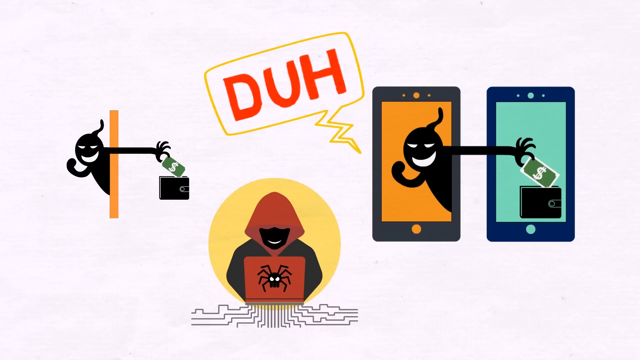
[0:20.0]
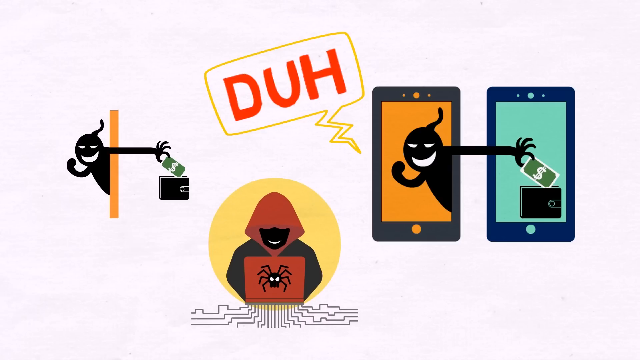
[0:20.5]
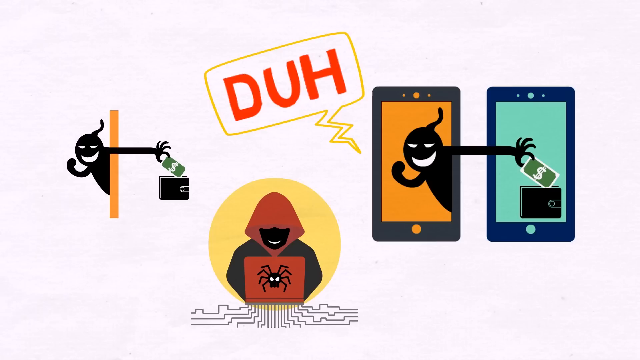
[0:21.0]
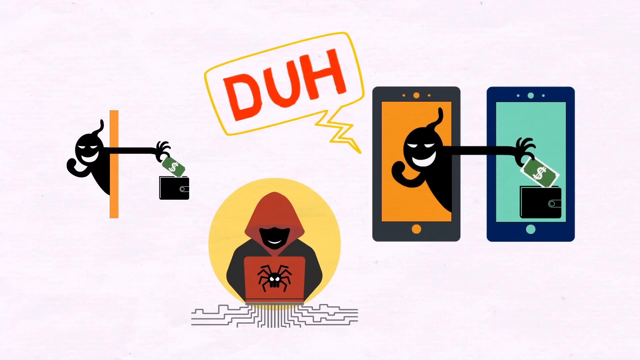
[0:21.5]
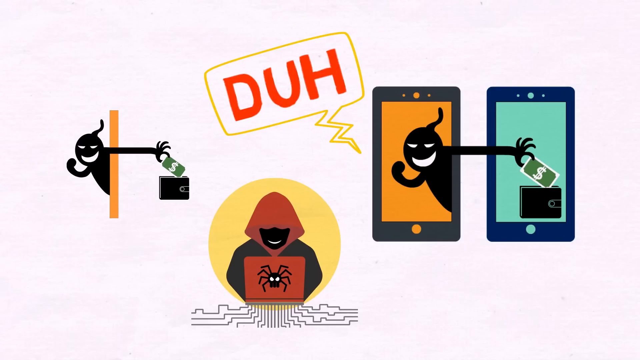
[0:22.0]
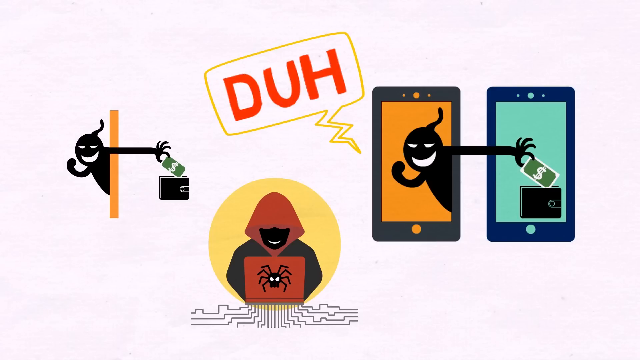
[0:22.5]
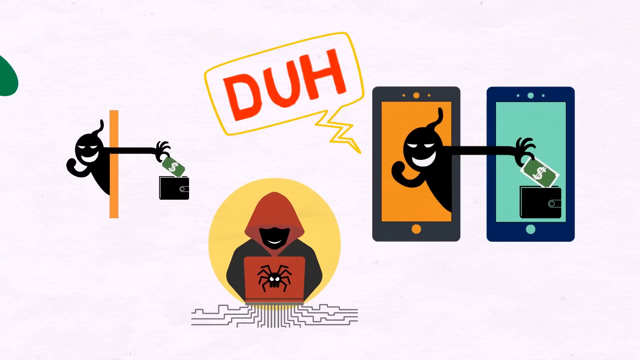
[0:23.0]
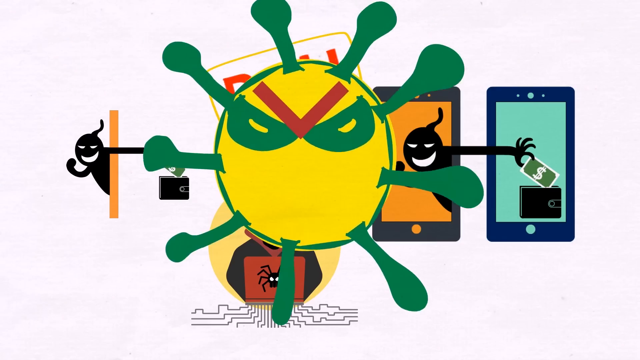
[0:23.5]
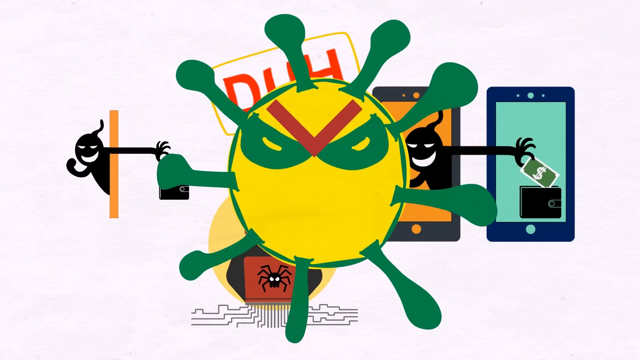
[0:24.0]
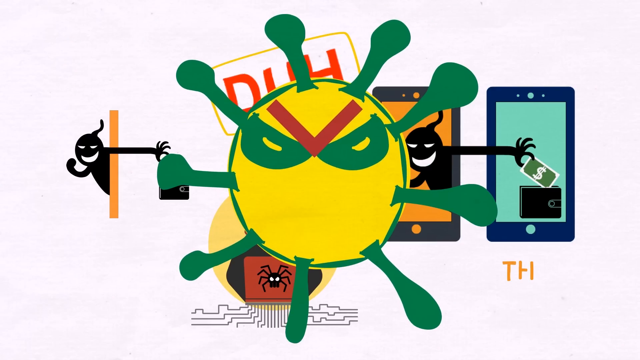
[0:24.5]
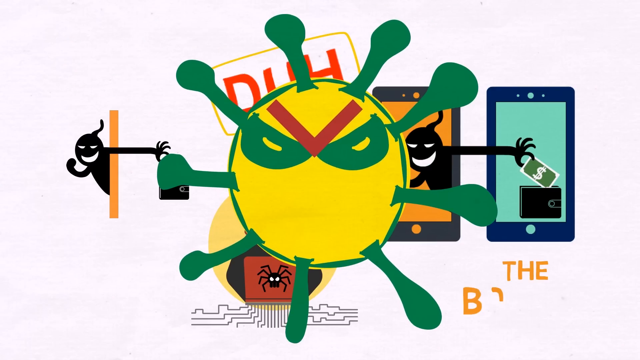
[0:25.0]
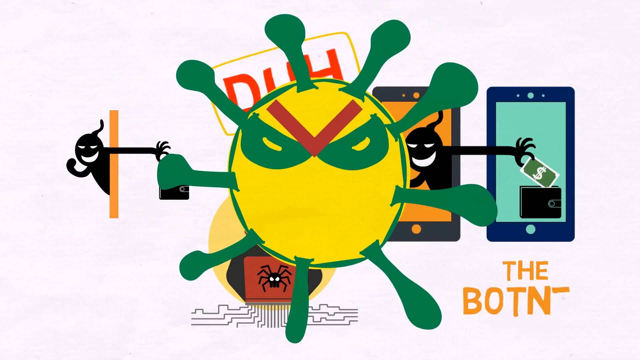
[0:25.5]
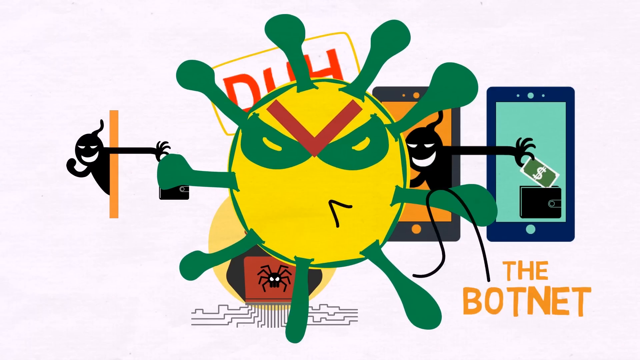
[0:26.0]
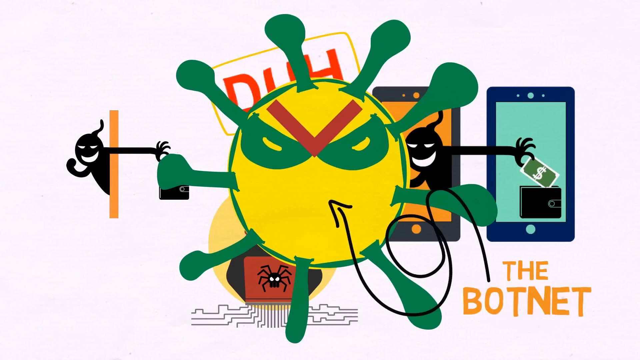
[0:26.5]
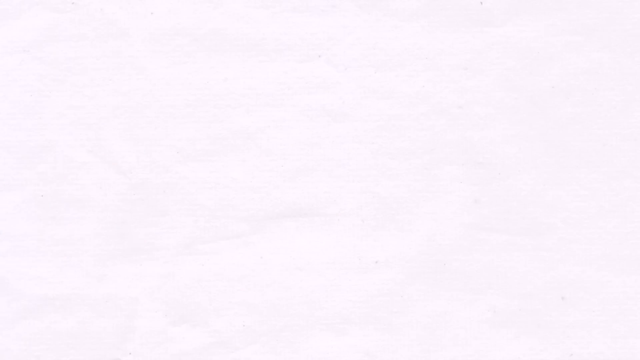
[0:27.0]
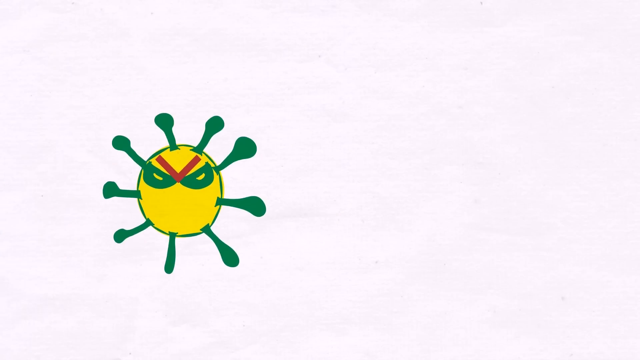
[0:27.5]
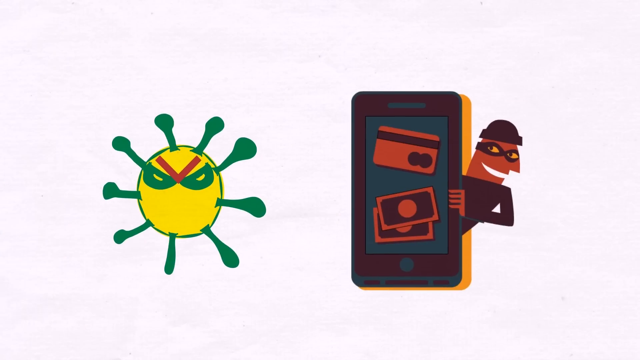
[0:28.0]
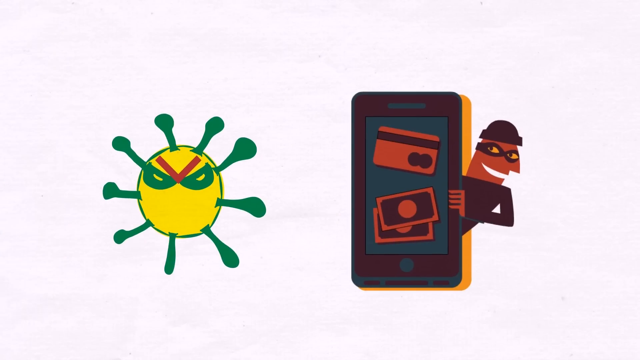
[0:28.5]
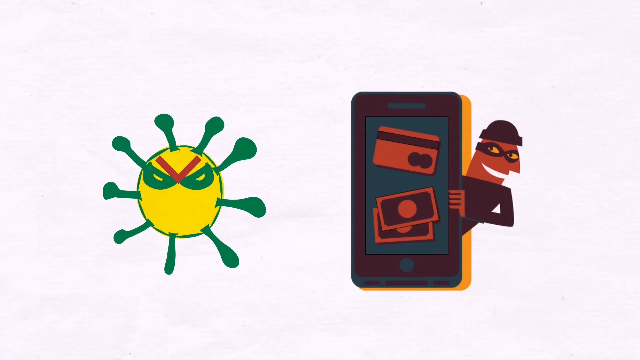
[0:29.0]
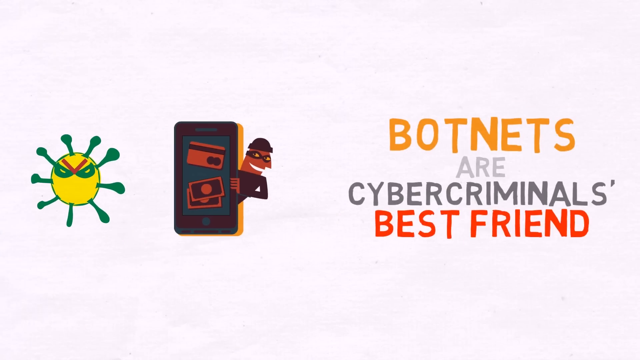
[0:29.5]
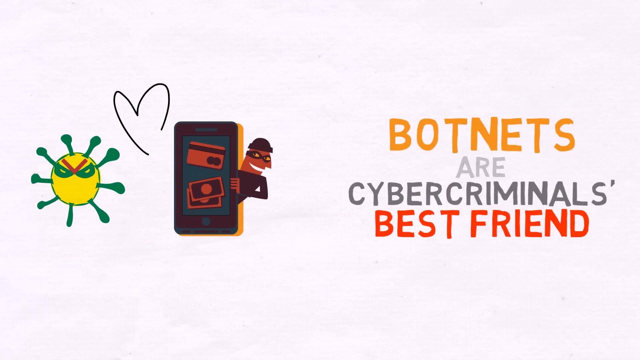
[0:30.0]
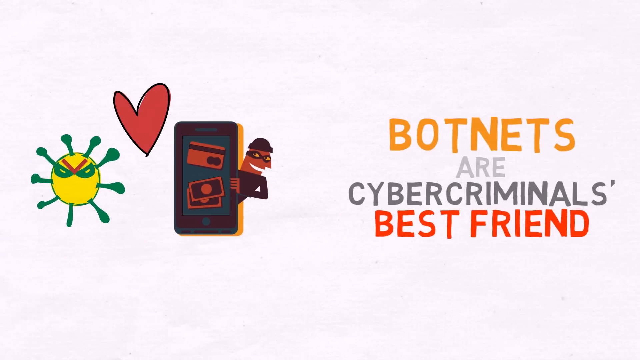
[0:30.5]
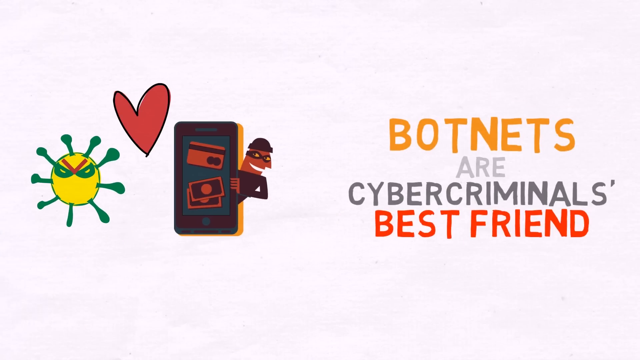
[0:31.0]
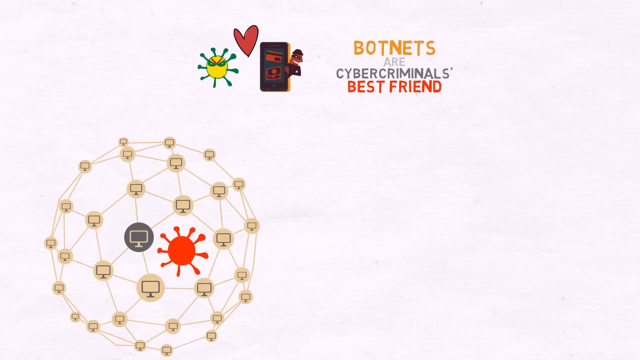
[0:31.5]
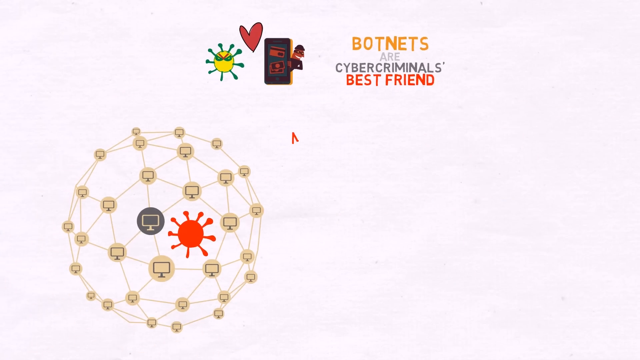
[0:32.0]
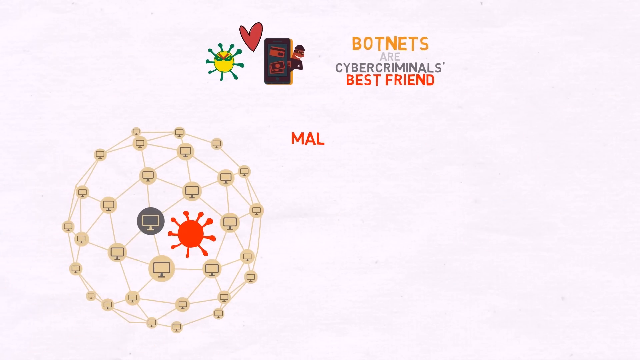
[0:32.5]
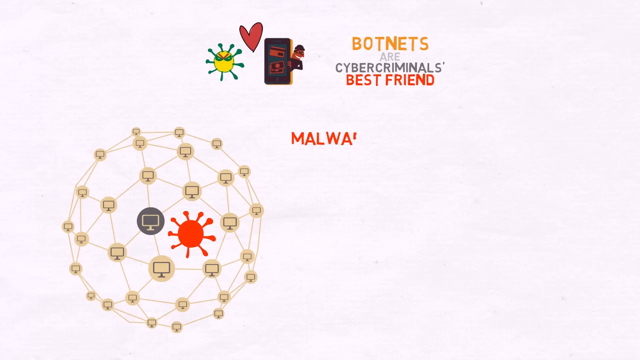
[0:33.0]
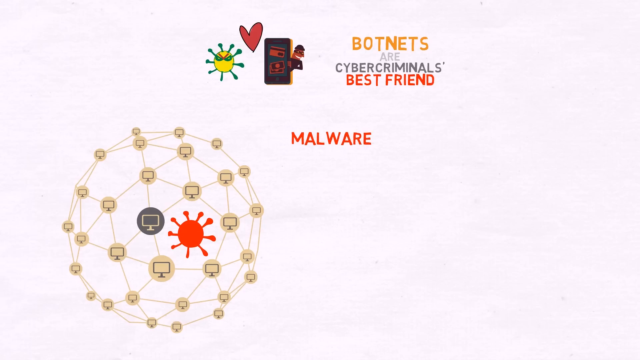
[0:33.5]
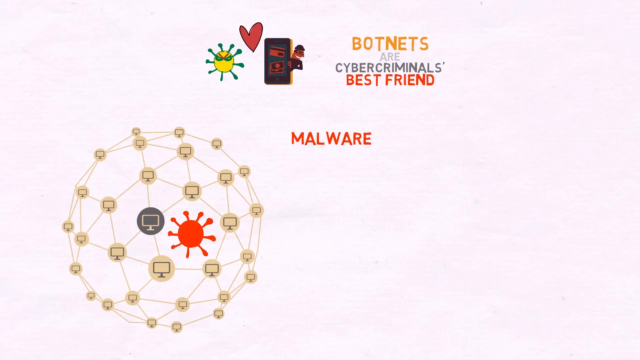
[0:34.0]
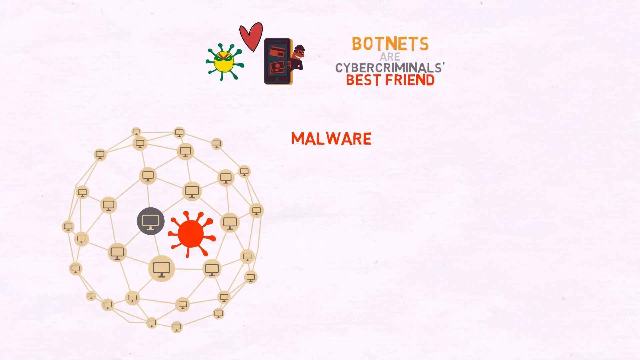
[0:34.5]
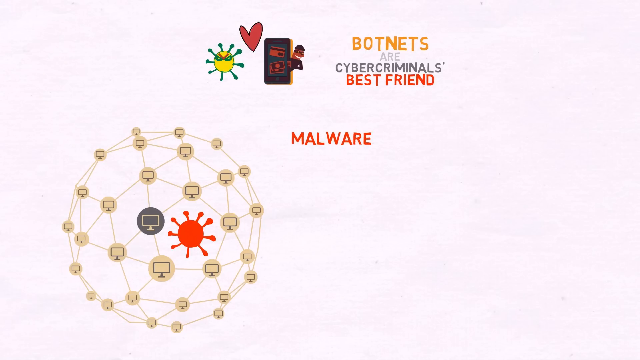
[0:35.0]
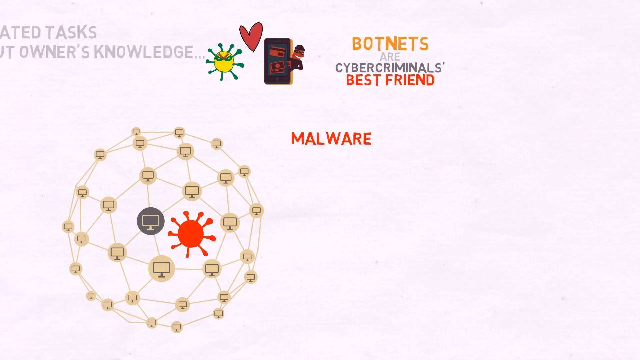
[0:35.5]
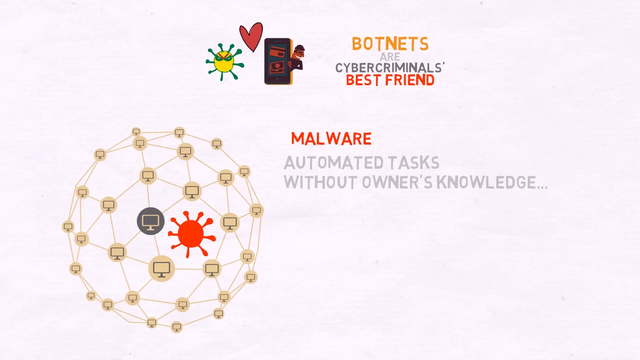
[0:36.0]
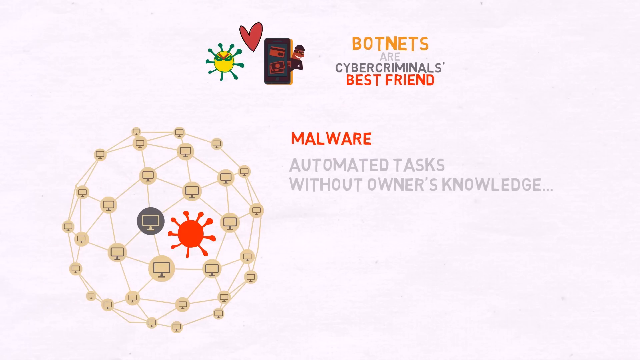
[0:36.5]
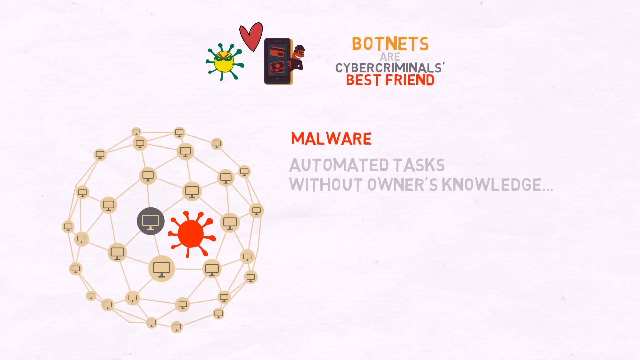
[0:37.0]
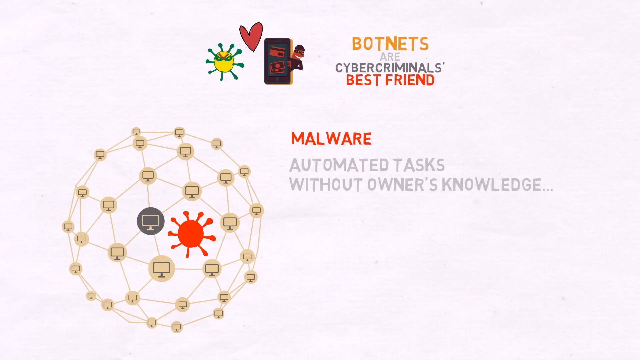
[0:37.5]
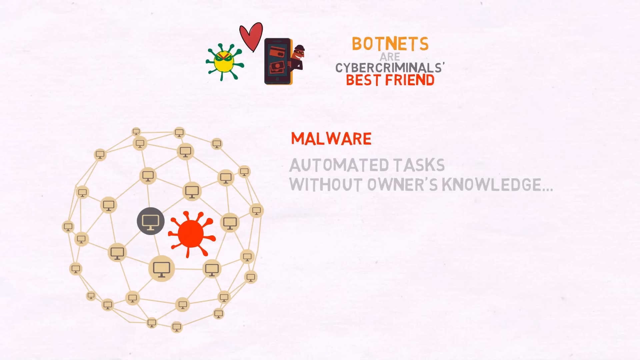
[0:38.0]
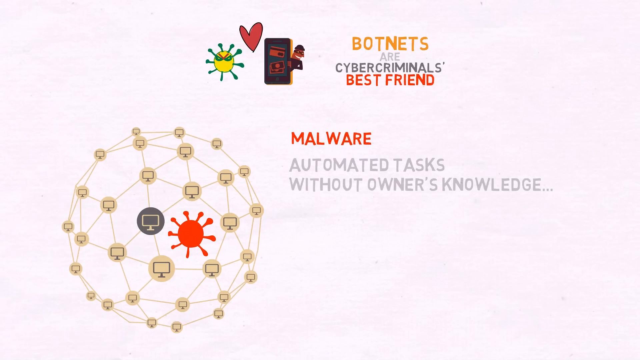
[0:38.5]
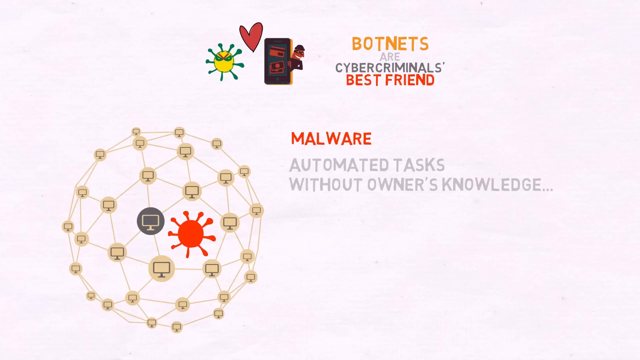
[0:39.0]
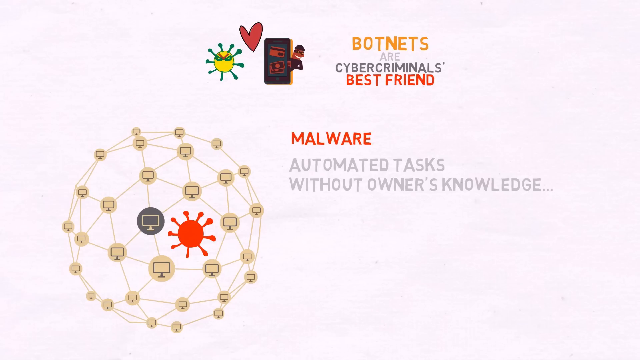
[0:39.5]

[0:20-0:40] The graphic changes. On the left-hand side appears a very basic black caricature figure with white eyes, a smiling white mouth and a black wavy thing leading from its head. It appears from kind of behind a vertical orange bar, and its left arm sneaks out across the front of the bar with the fingers spread, the thumb and forefinger appearing to pick up a dollar note by its edge. The note is a green oblong with a white dollar sign in the middle, above a black wallet with a catch on its right-hand side, presumably sealed with a stud, so someone appears to be taking money from a wallet. Further towards the centre at the bottom is a yellow speech bubble with a white background containing "Duh" in red. Below it is a graphic of an individual in a yellow circle wearing a red hood and a black shirt, with only black colouring for the face and a white upturned mouth. His laptop is open, facing the camera, and its lid shows a basic spider drawing with very bright white eyes on a red background. Lots of black lines lead from it, appearing to represent a laptop connecting to various things. To the right of the "Duh" bubble is what appears to represent a mobile phone screen with a grey border and an orange screen, showing a similar malevolent black character with white eyes and mouth and little pointy things sticking up from his head. His hand reaches into the screen of another mobile phone to the right of this grey border. The phone screens have pale green backgrounds, a small dot at the centre bottom of the frame, and at the top a small dot with a smaller dot on either side. As the character reaches into the phone screen, the image of the dollar being picked from a wallet is reproduced there.